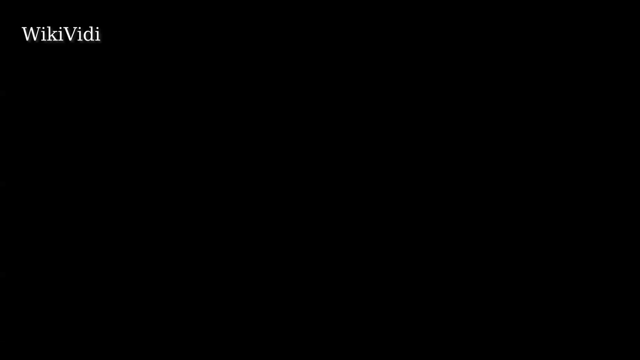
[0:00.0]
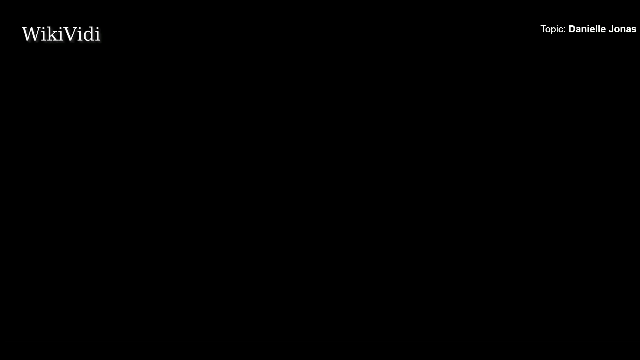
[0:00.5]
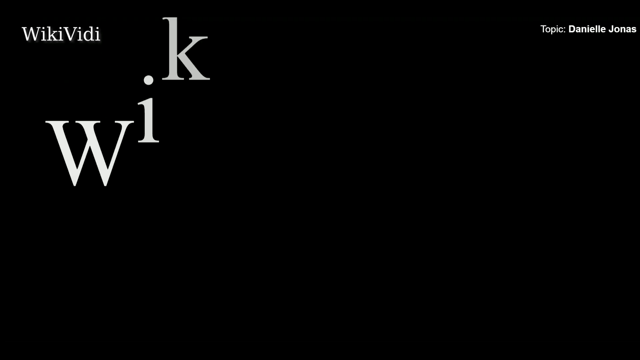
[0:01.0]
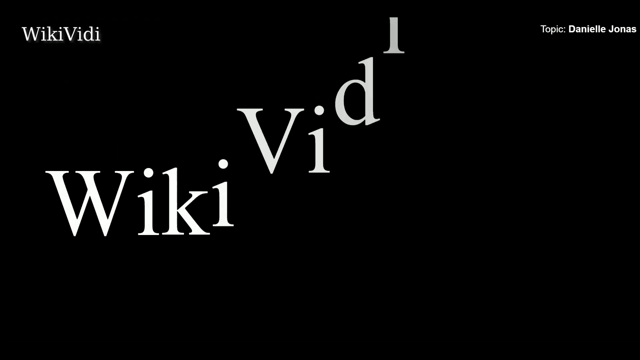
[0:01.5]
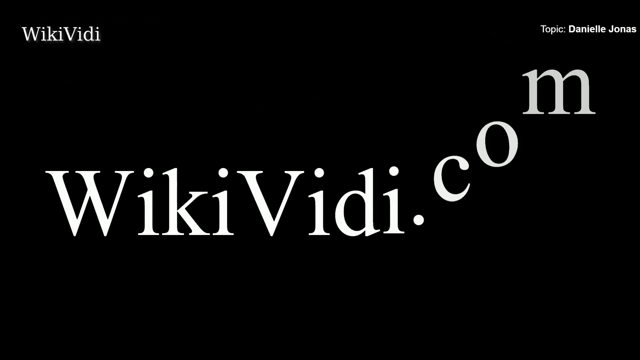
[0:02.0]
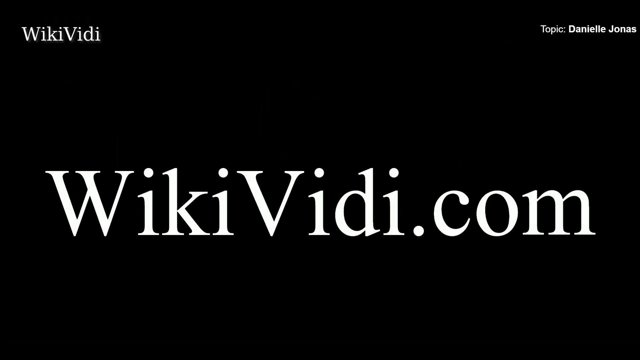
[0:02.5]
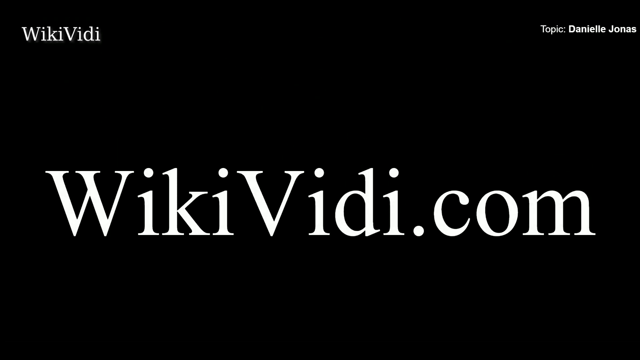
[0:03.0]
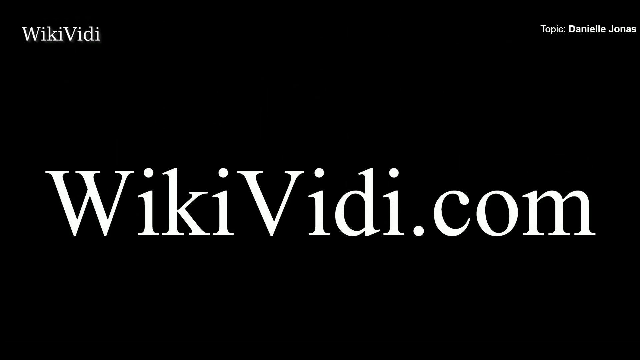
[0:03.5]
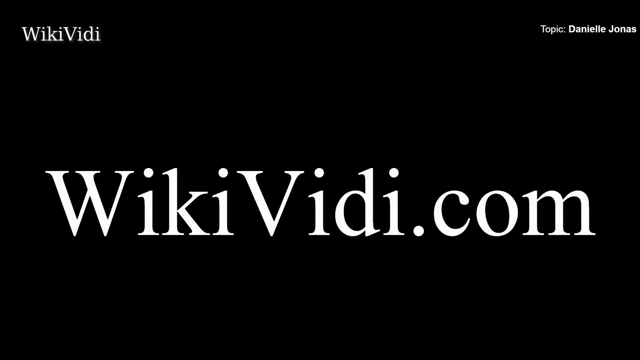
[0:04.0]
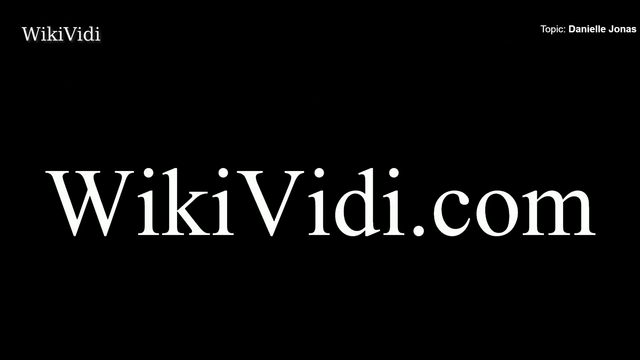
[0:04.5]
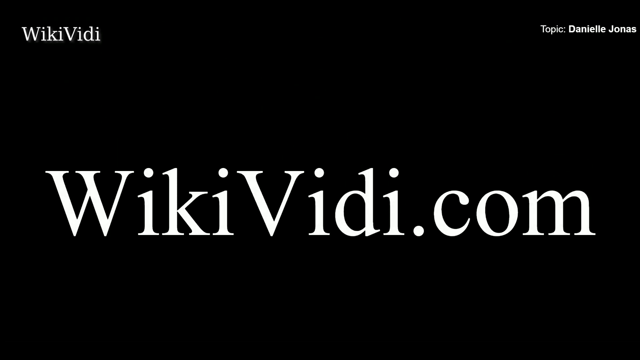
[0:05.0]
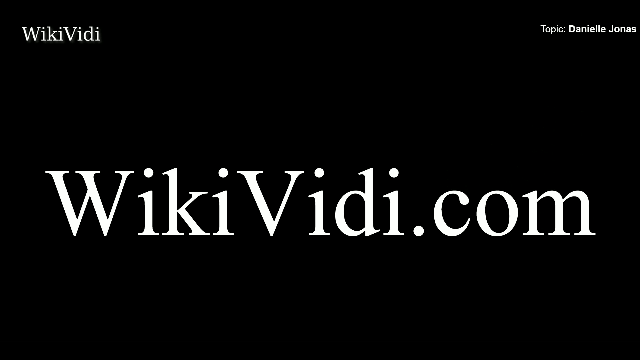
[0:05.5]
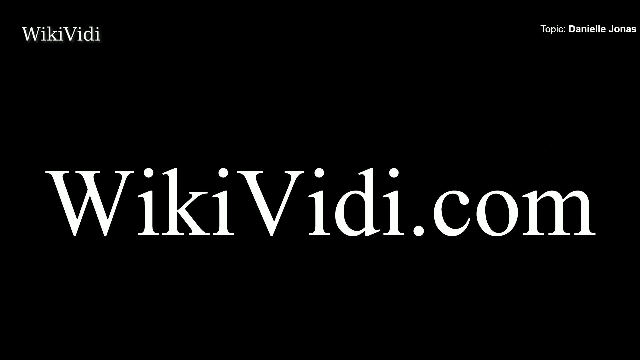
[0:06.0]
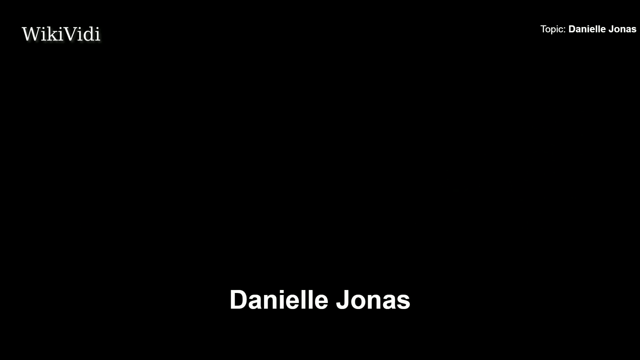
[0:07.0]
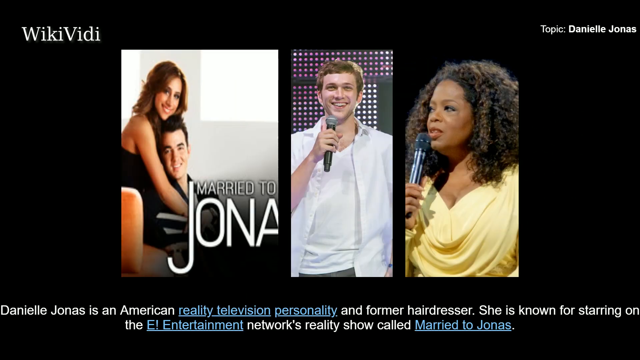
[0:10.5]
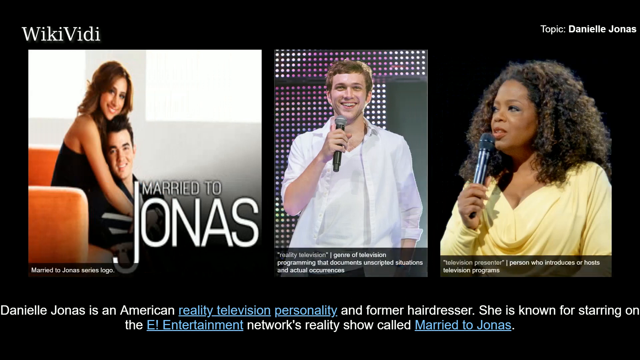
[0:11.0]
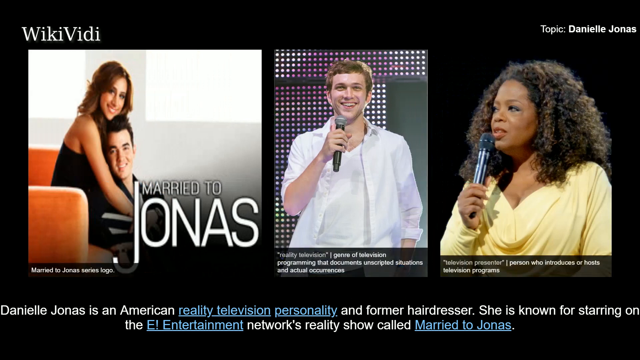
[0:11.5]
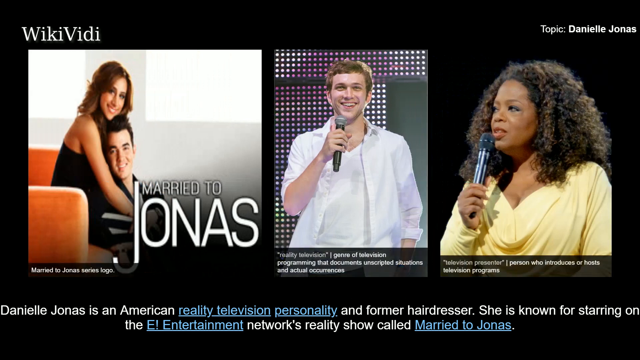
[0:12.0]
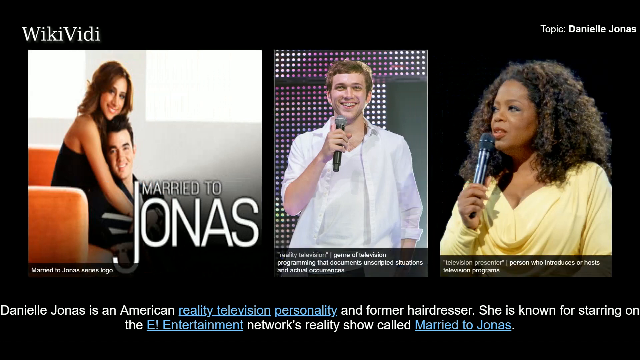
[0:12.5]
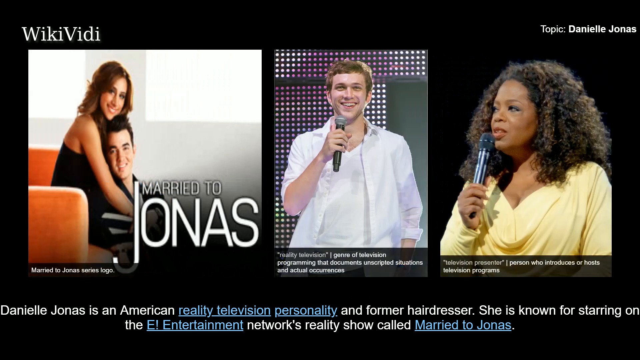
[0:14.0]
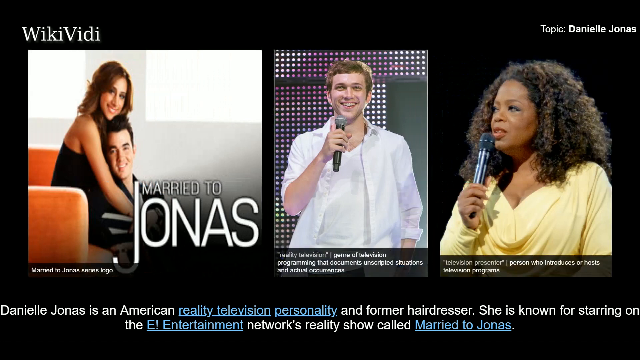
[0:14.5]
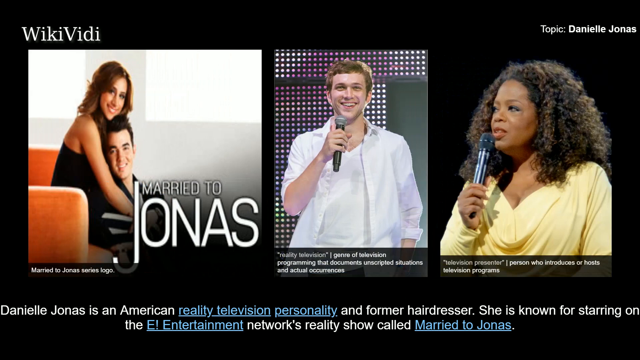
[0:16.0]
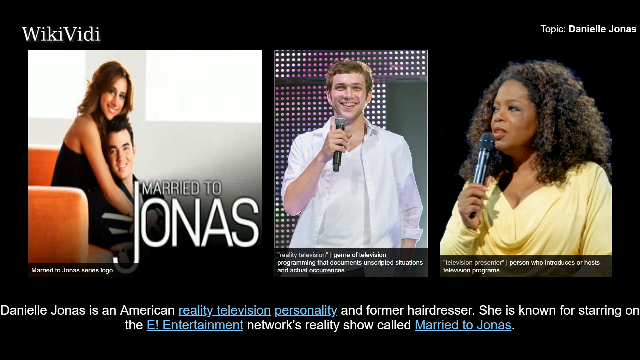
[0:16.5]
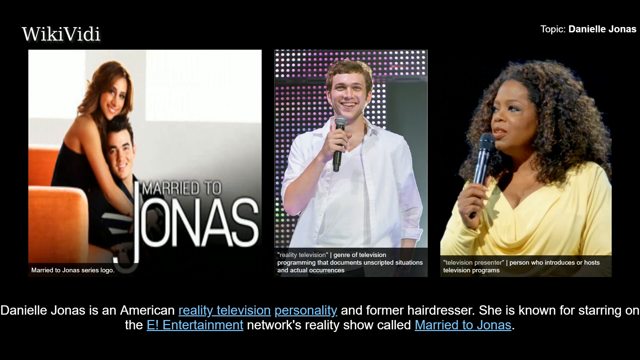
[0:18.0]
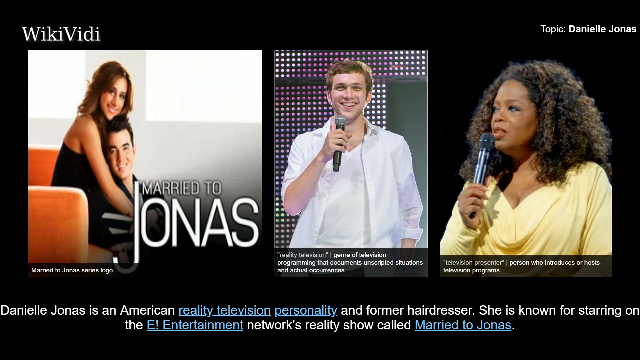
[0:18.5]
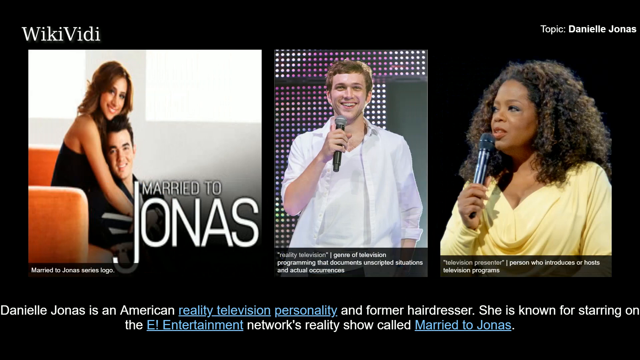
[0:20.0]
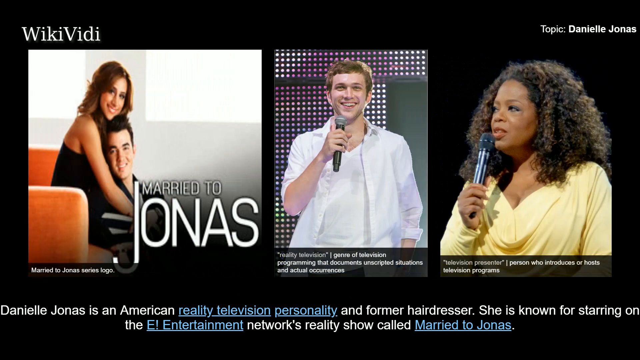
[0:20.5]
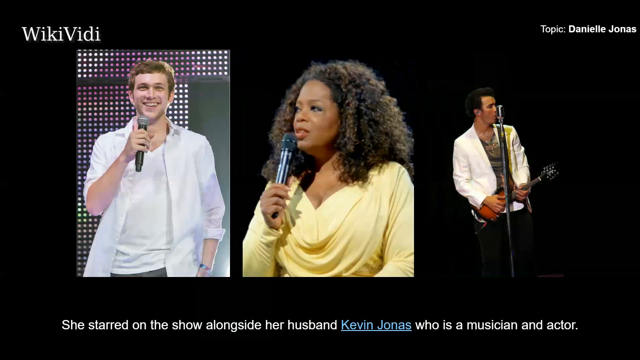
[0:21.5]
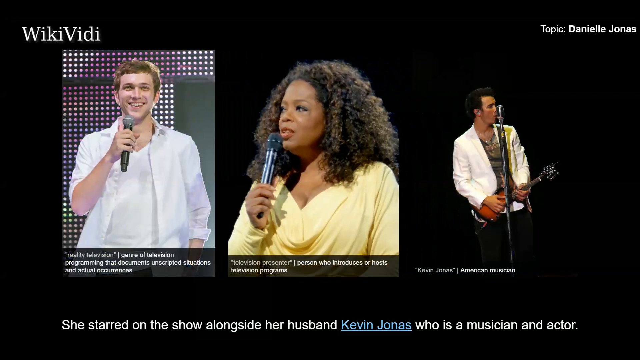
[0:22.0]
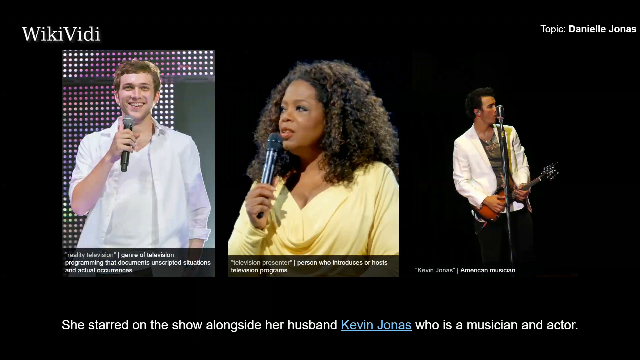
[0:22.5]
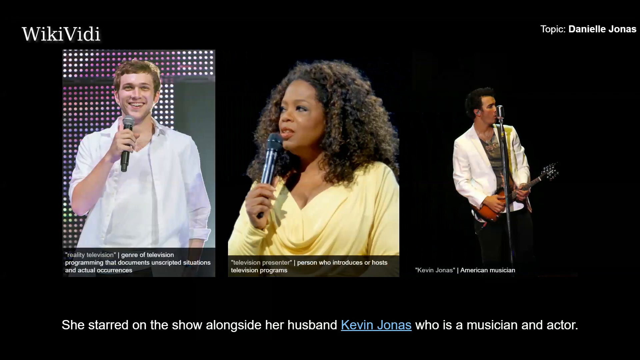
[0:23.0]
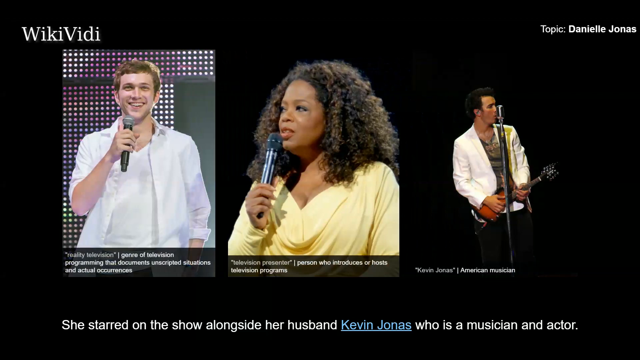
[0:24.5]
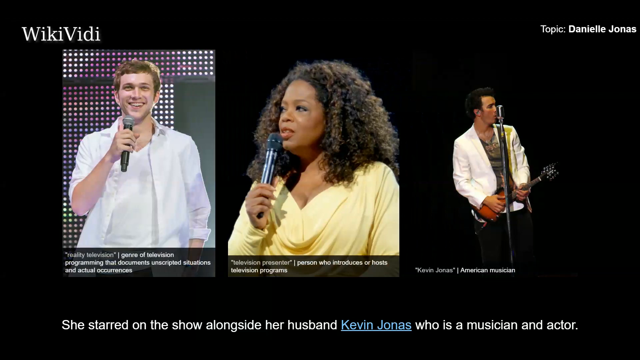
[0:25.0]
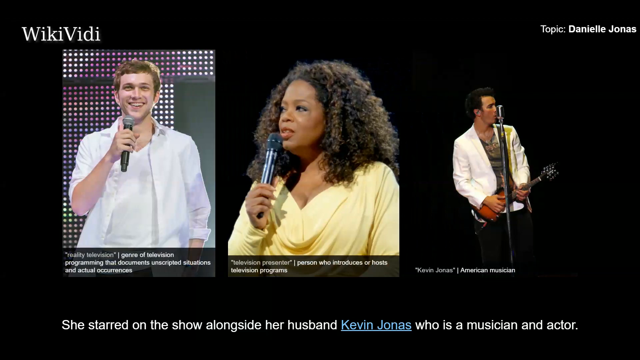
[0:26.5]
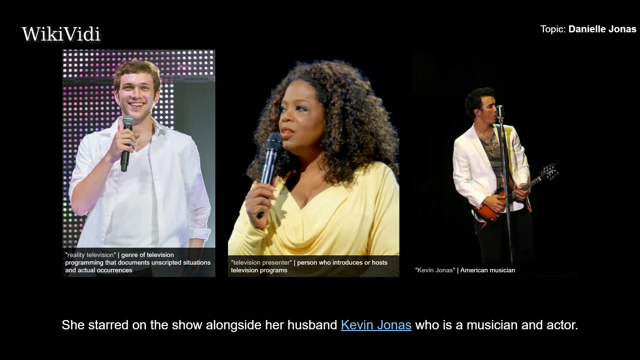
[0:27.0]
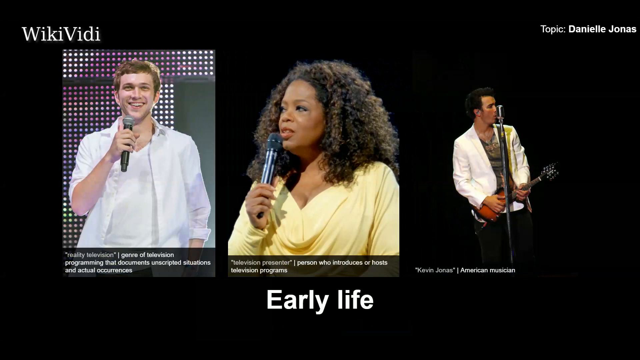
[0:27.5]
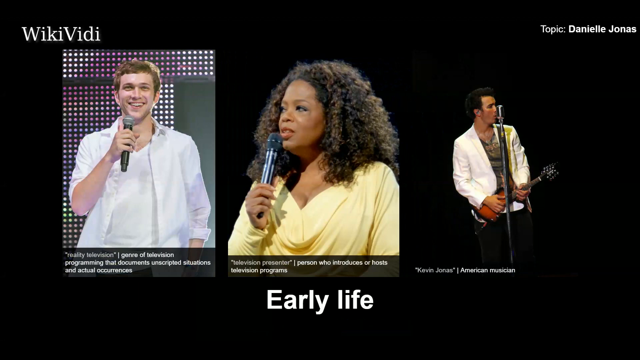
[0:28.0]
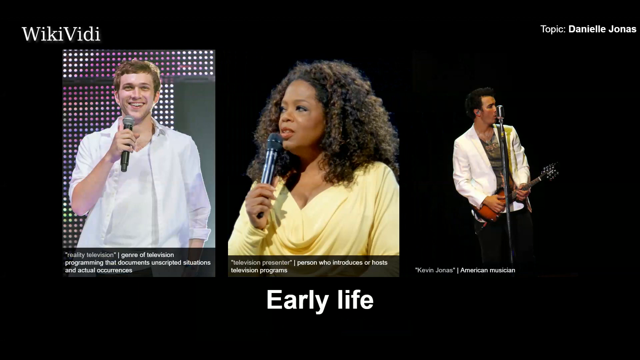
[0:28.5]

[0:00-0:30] The video opens on a black screen with "WikiVidi" in white text at the top left and "Topic Danielle Jonas" in white text at the top right. Large white text reading "WikiVidi.com" then appears in the middle of the black background. The middle text disappears, and white text at the bottom reads "Danielle Jonas." After a transition, three pictures are shown on the black background. The left picture is of a man and a woman, with text over it reading "Married to Jonas." The middle picture shows a man in a white shirt with a microphone, standing on a stage with lights on the wall behind him. The far-right picture shows a Black woman, apparently Oprah, holding a black microphone, wearing a yellow long-sleeve shirt, with long curly brown hair. Text at the bottom is about Danielle Jonas, and then it changes to continue about Danielle Jonas and her husband Kevin Jonas. The far-left picture goes away, and a different picture comes up on the far right showing what looks like Kevin Jonas on a stage, playing a guitar-like instrument and singing into a microphone.